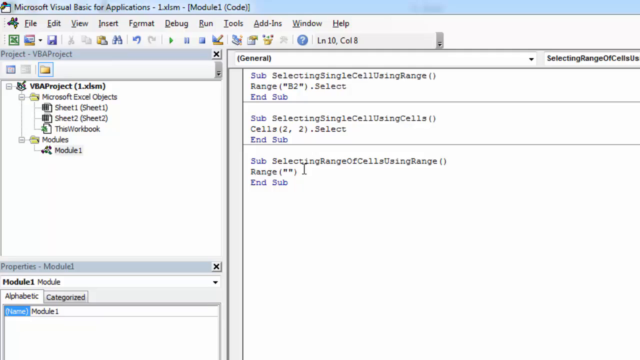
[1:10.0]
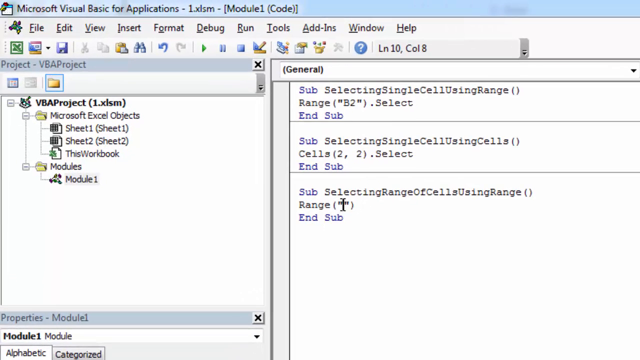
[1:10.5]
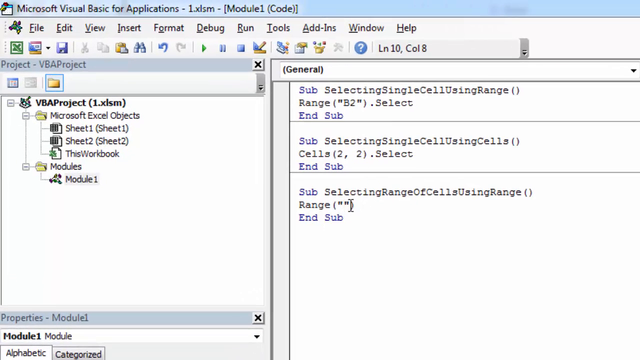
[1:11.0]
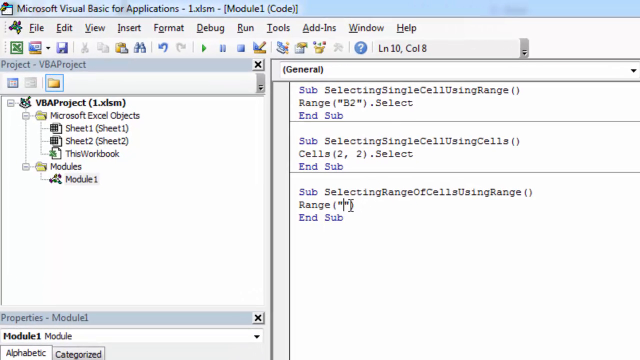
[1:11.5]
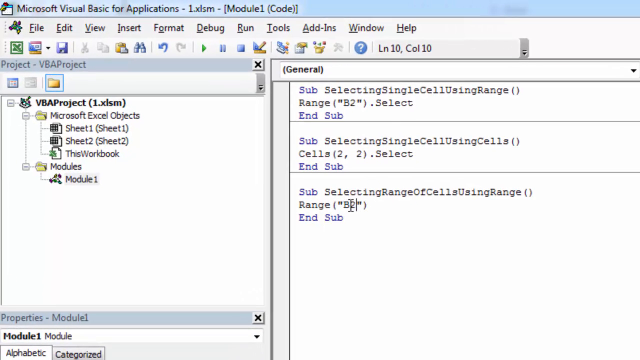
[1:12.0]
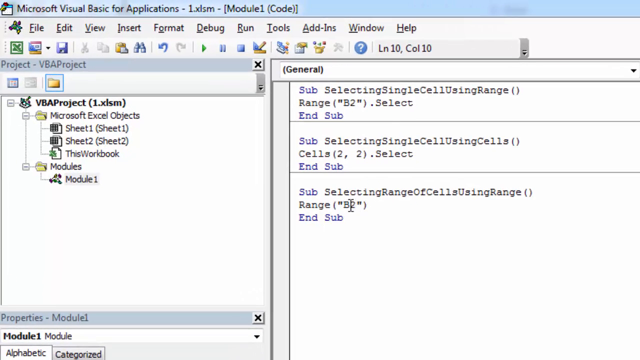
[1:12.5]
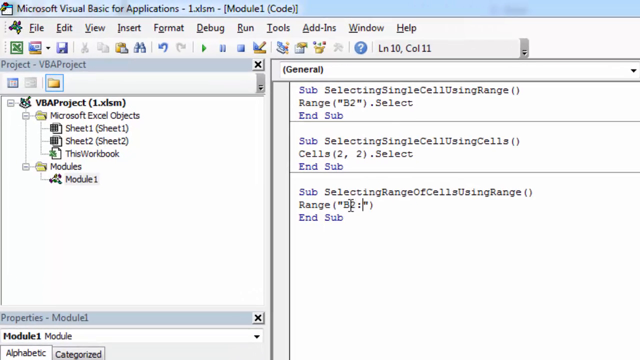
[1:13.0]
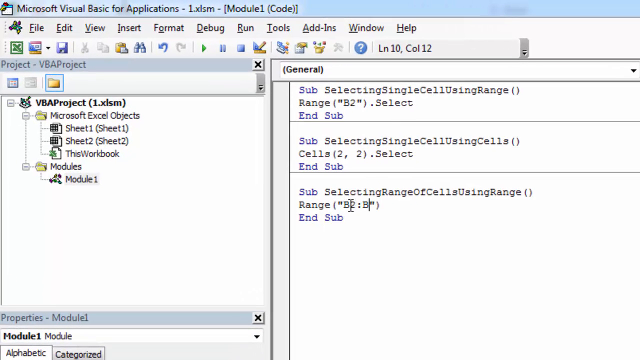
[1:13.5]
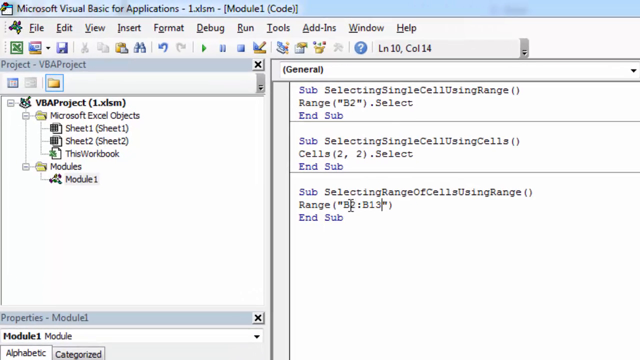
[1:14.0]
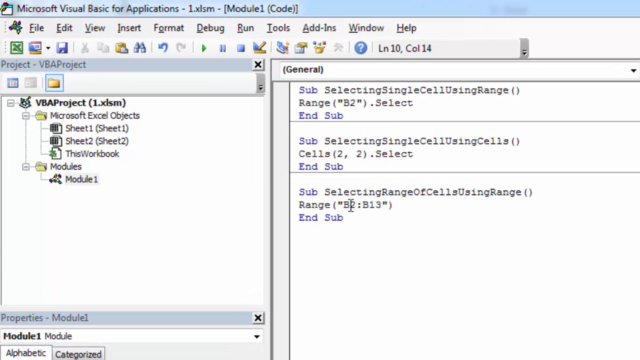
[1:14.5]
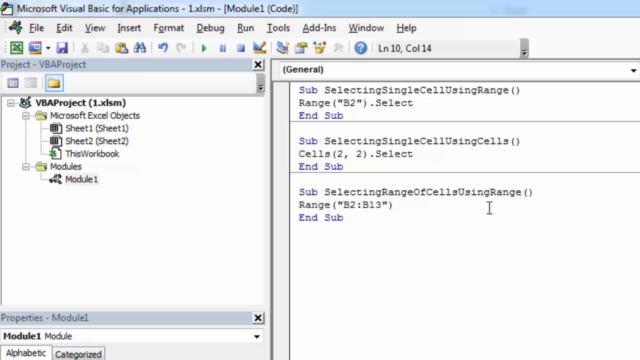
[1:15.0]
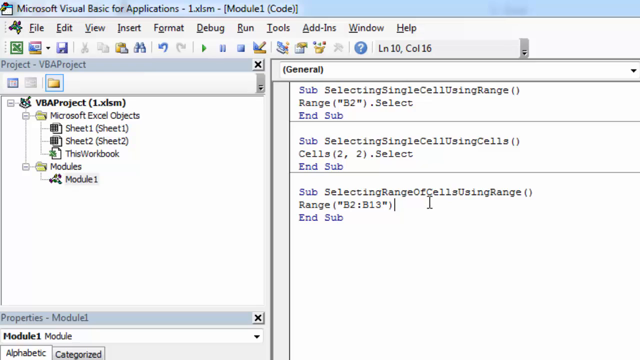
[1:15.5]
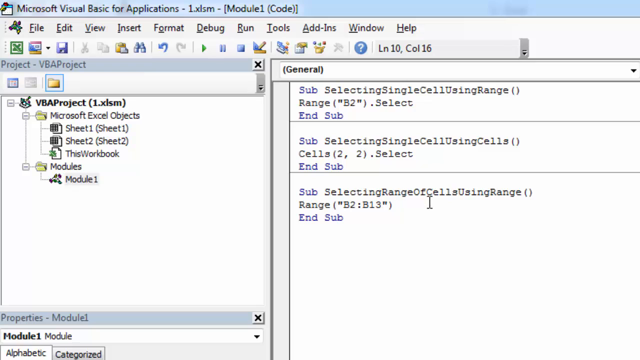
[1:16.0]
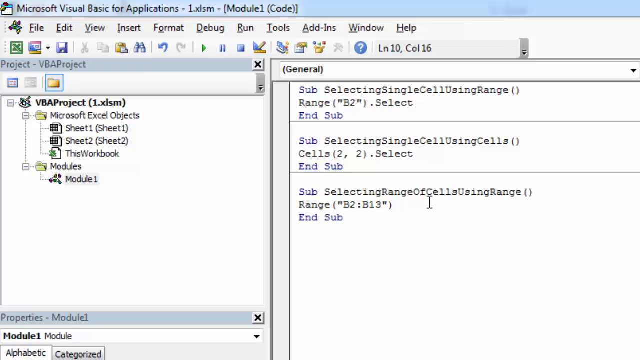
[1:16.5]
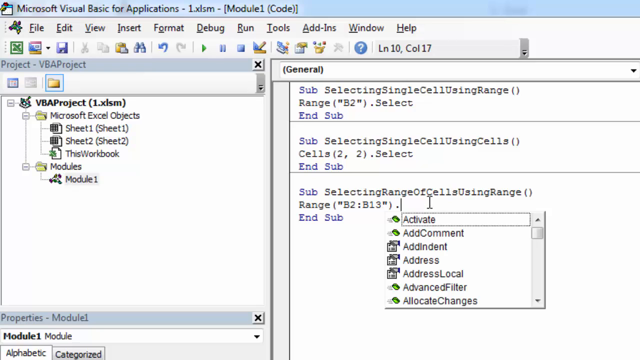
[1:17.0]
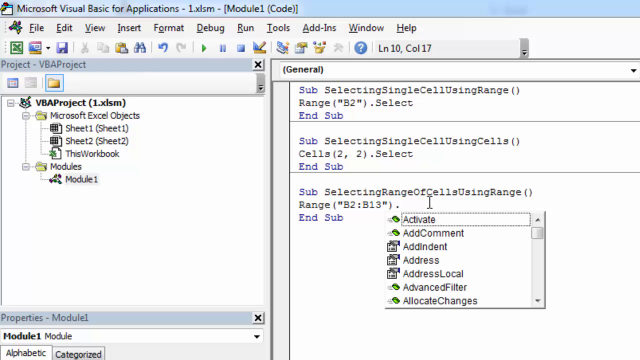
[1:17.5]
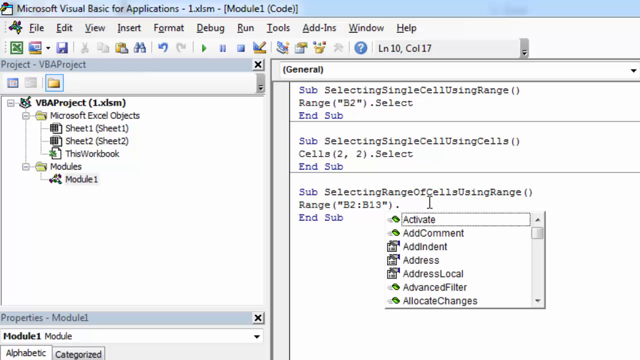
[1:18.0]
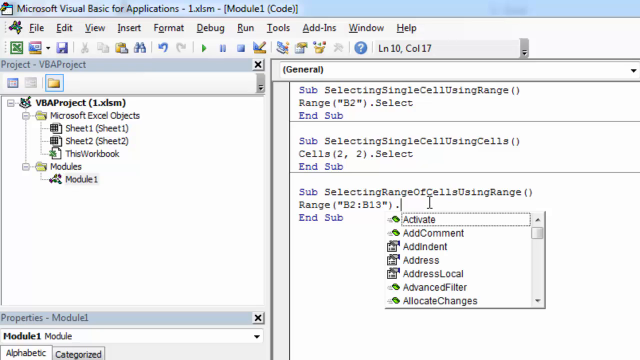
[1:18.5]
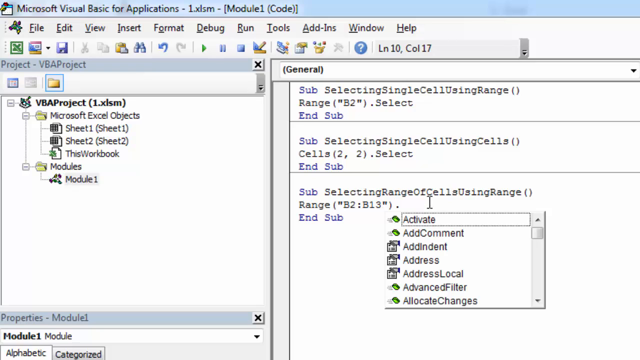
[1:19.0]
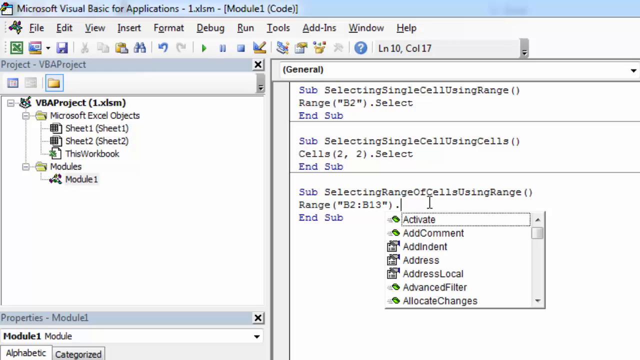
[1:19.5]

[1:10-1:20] Microsoft Visual Basic for Applications is open, with two toolbars across the top, and the view zooms in on the left-hand project panel and the right-hand coding panel. As the zoom toward the coding panels finishes, the user places the cursor between two empty quotation marks left in the code and types B2 to B13. He adds a period after the command, which makes a drop-down menu of commands appear, at first including activate, add comment, add indent, and others. The user types SELECT, which appears in the drop-down menu, and finishes the word by selecting it from the menu. The chunks of code now read: "sub selecting single cell using range, range b2.select, end sub"; "sub selecting single cell using cells, cells 2,2.select, end sub"; and "sub selecting range of cells using range, range b2 to b13.select, end sub". The toolbar has options such as File, Edit, View, Insert, Format, Debug, Run, Tools, Add-ins, Window, and Help.